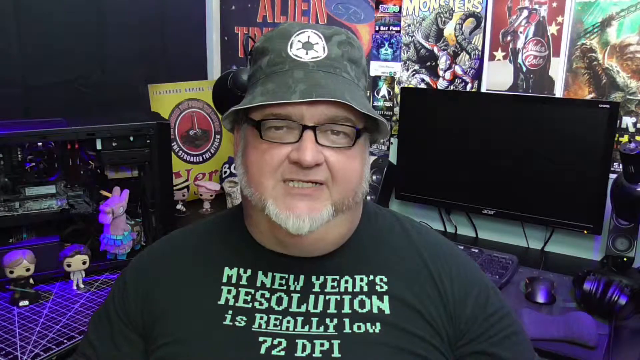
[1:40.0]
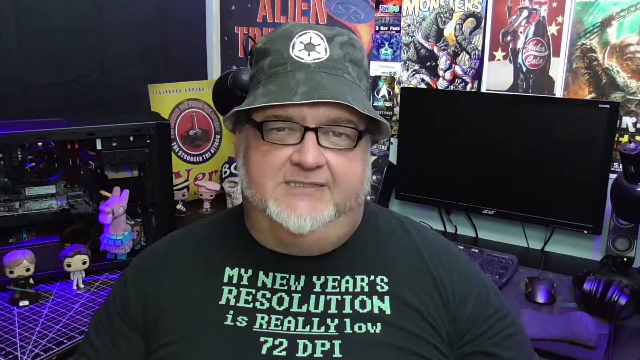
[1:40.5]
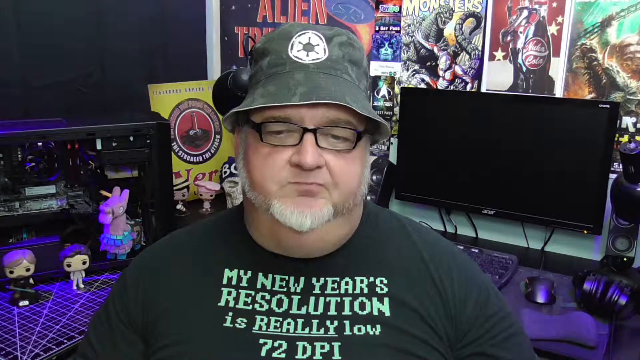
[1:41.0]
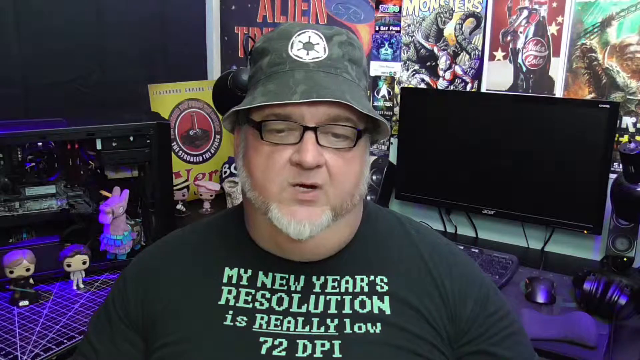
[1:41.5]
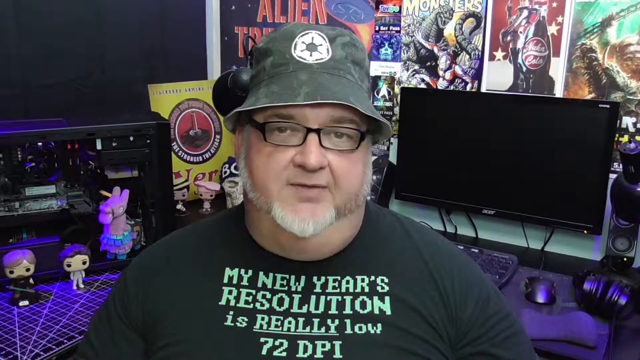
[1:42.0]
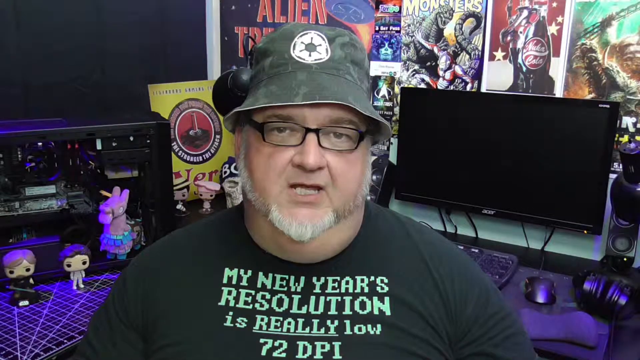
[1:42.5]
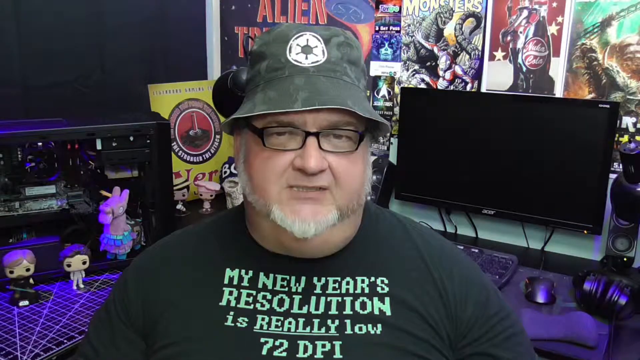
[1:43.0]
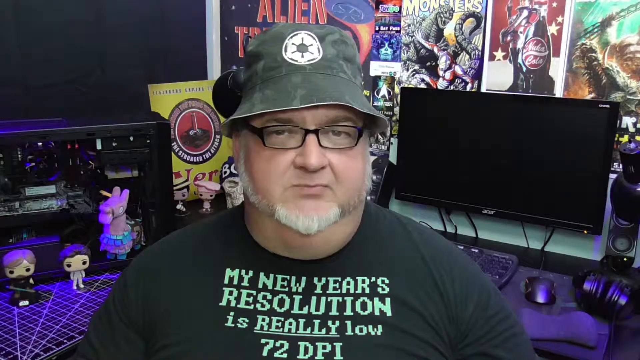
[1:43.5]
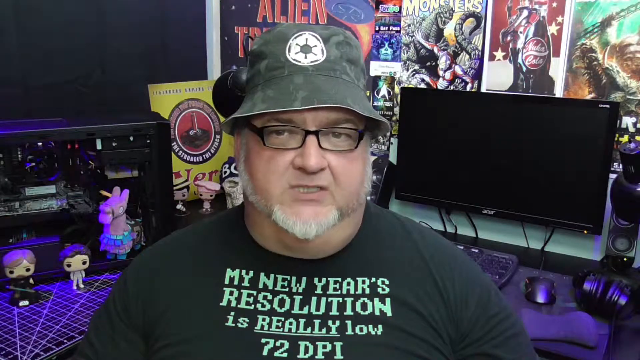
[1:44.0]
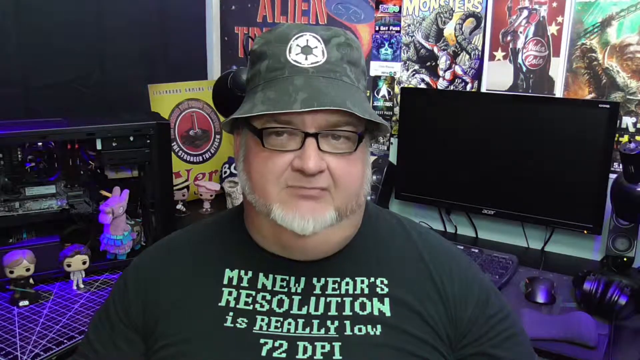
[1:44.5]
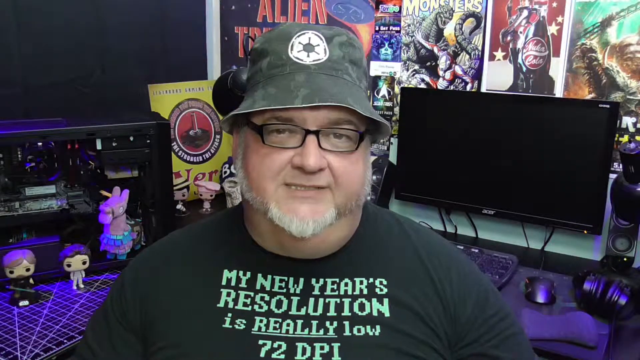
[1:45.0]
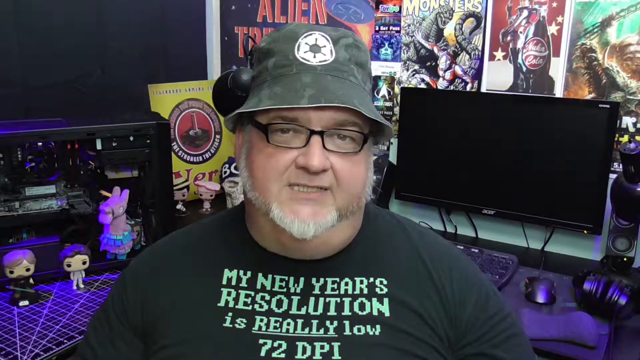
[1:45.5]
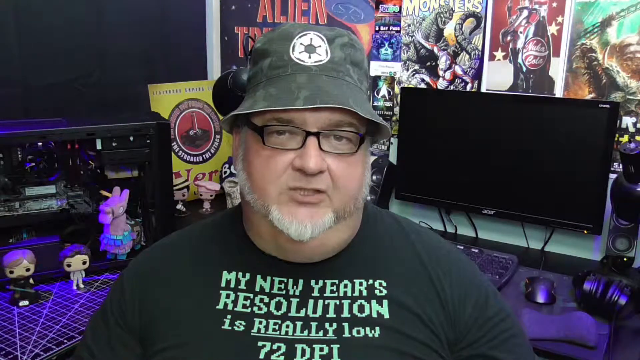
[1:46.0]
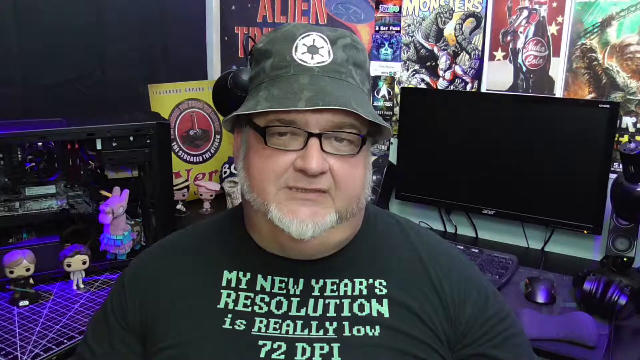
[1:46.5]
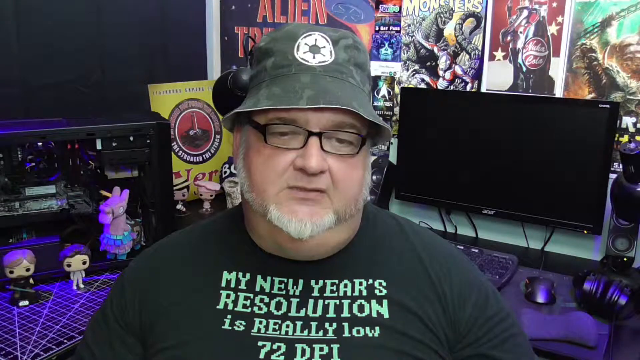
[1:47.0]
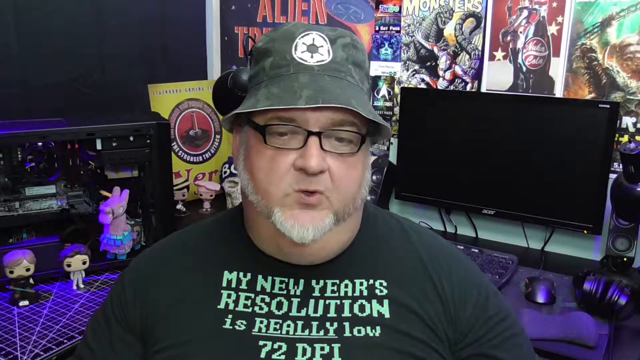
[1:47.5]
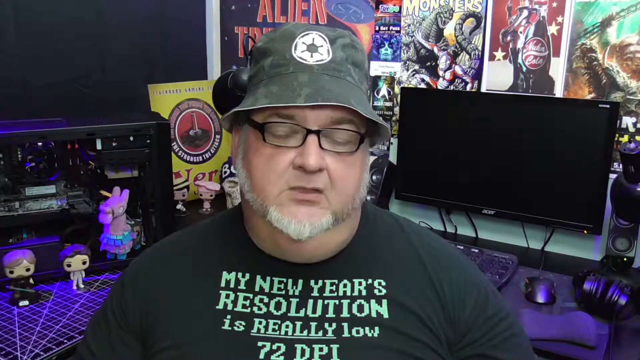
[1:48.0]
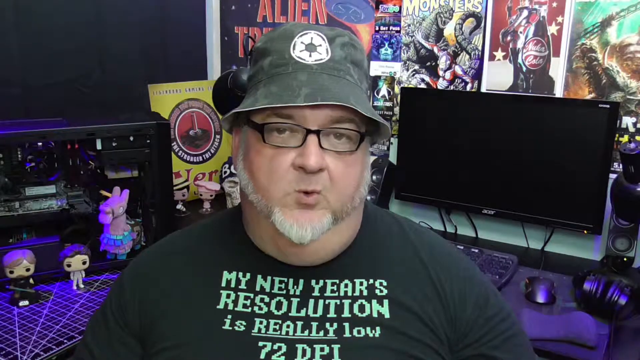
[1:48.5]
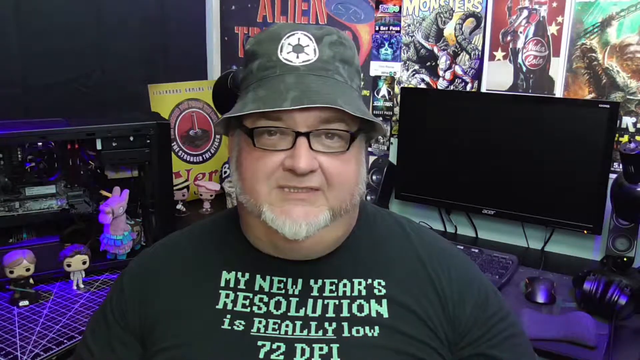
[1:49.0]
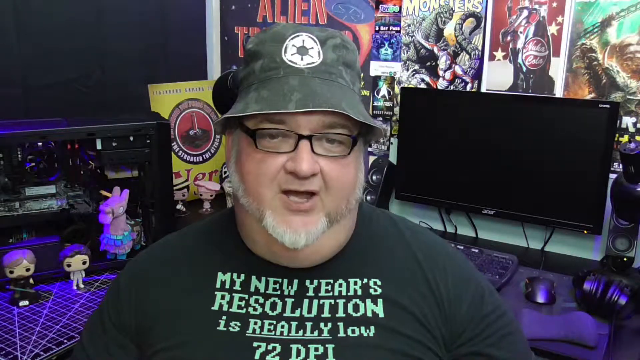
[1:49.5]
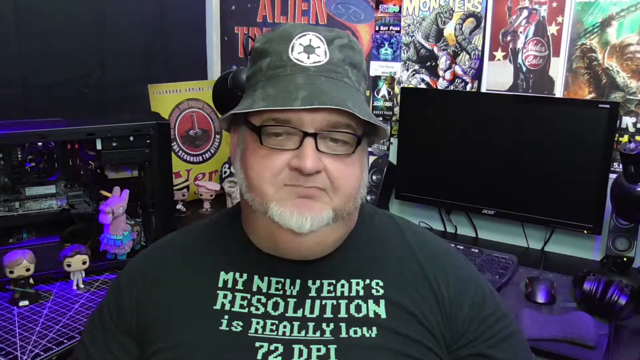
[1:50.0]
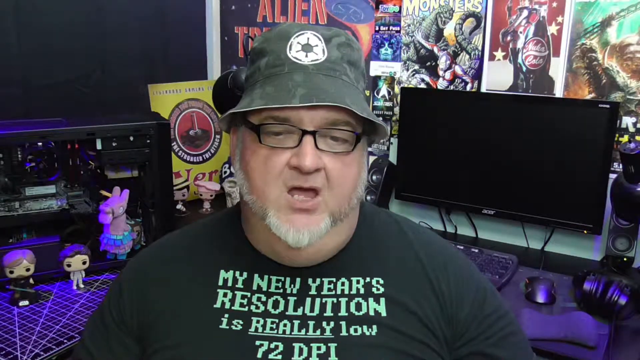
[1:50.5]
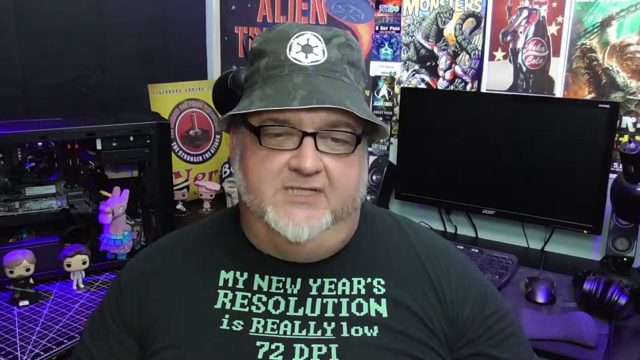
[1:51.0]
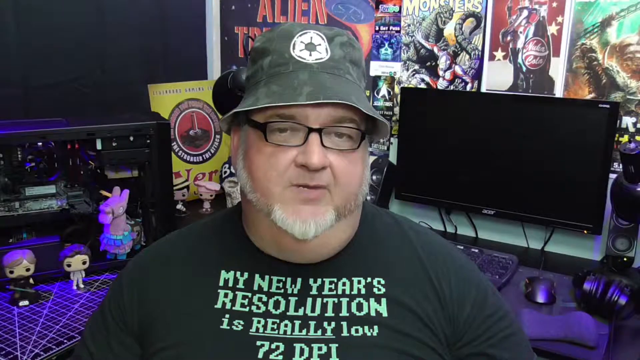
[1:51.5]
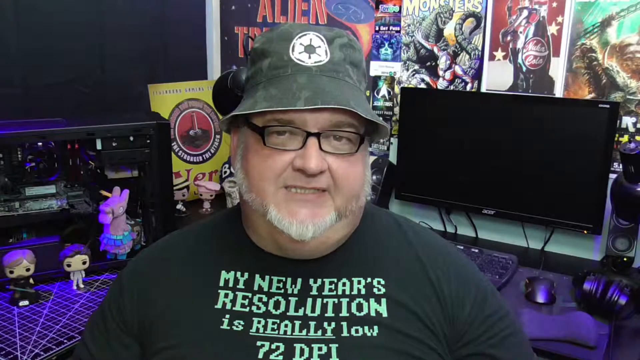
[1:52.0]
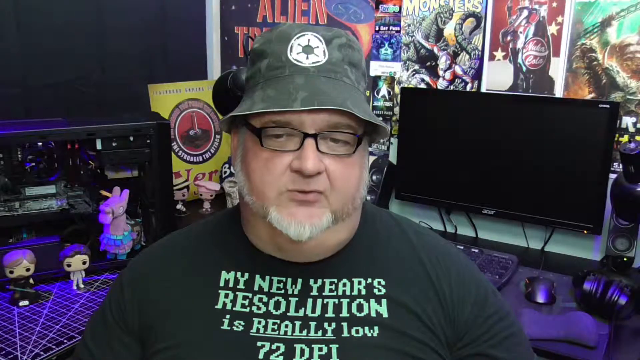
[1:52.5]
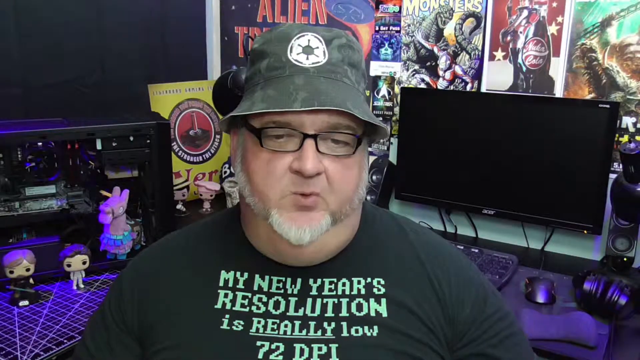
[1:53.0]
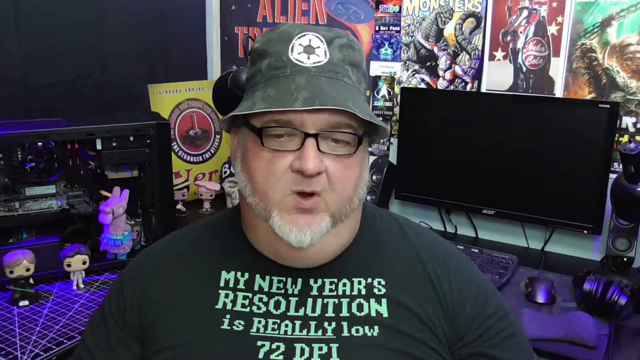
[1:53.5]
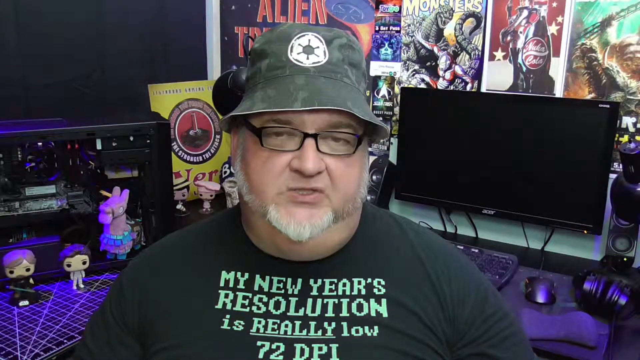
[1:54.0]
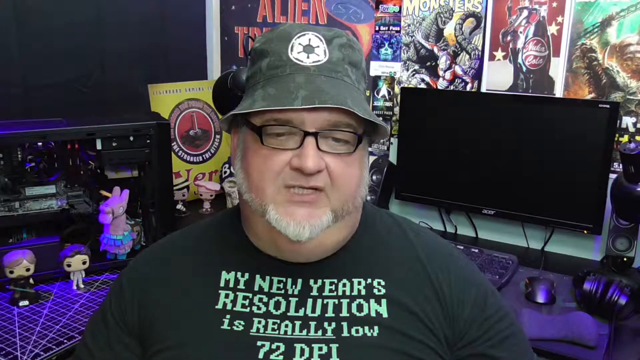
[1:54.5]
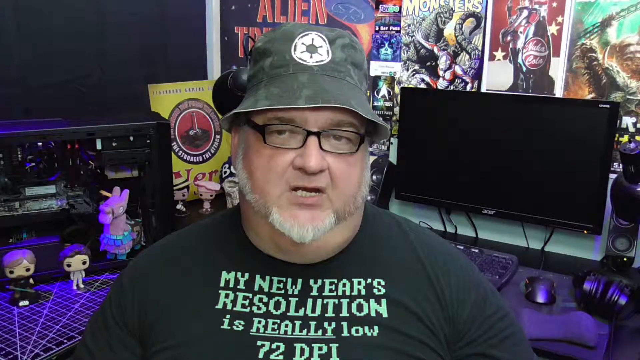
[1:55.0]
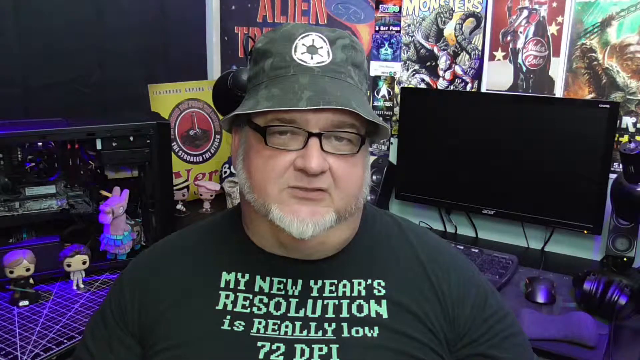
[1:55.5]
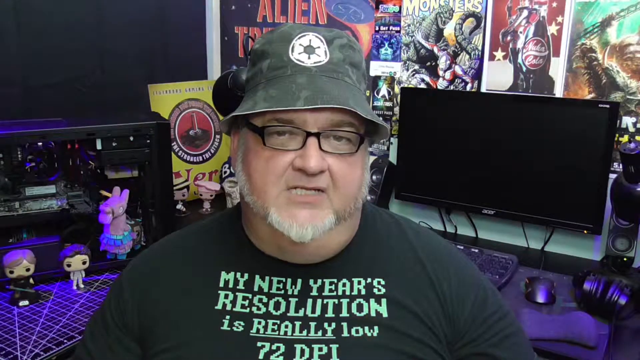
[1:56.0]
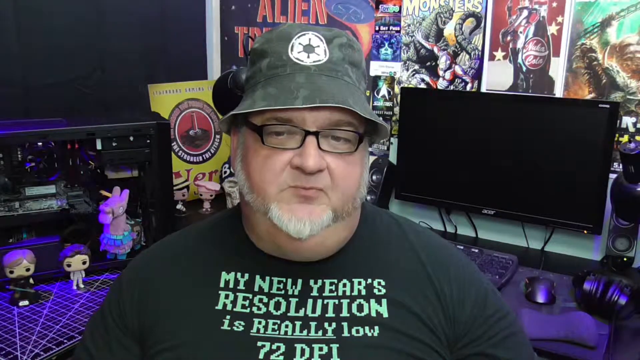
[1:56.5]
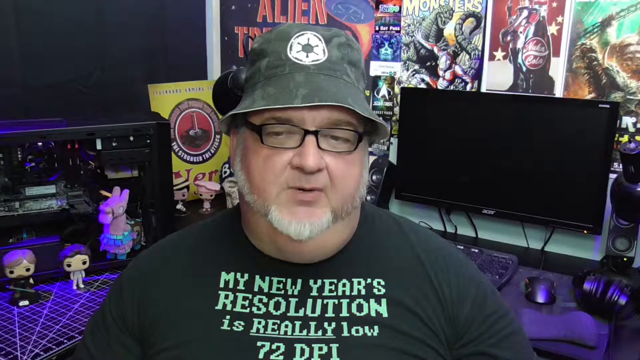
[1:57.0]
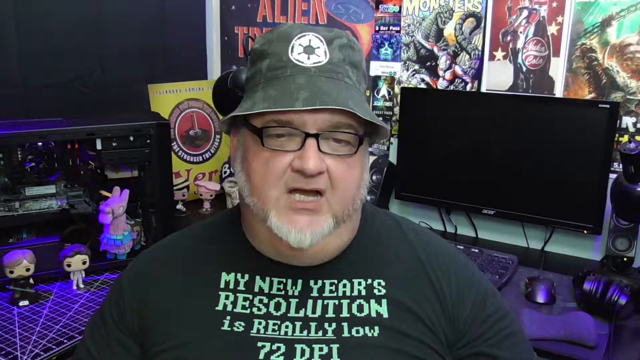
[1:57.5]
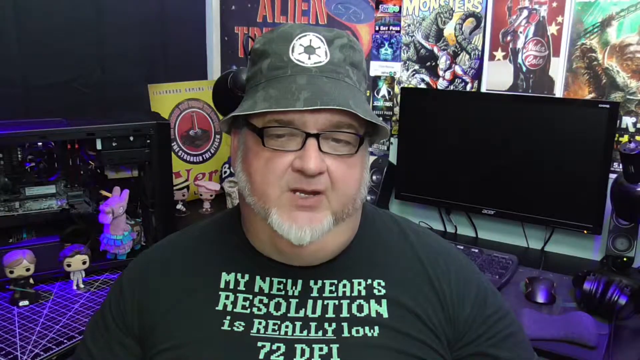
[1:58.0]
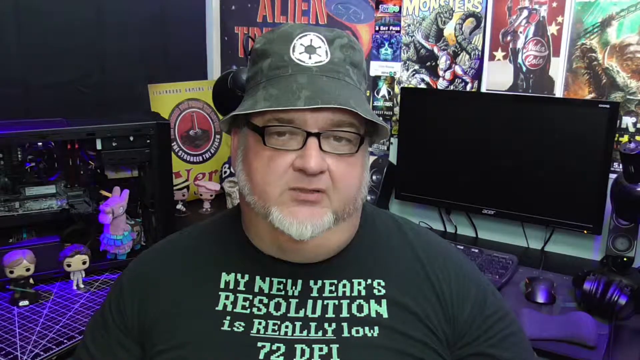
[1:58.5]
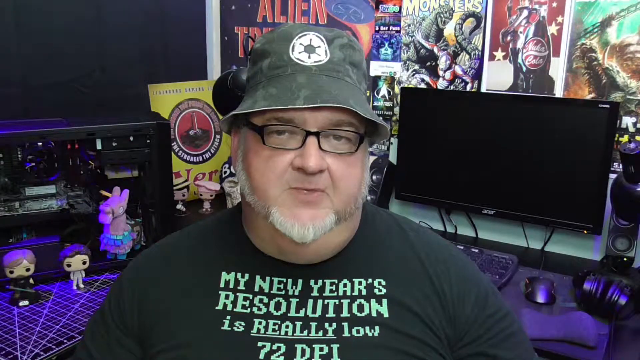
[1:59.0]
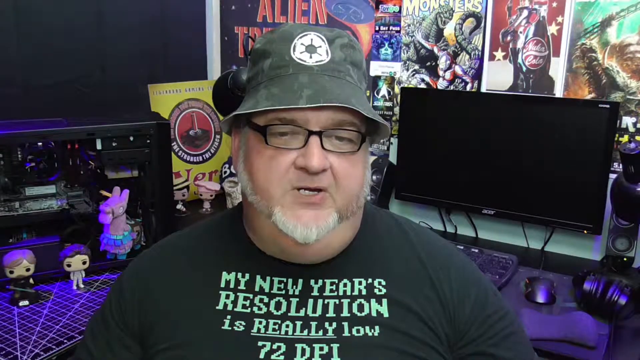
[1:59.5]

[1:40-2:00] The man speaks directly to the camera, his eyes still wandering a bit as if he is taking reference from something written. As he speaks, his quite big double chin bounces, and he is very expressive, his eyebrows moving quite a lot. His glasses are small and rectangular with a black frame. His bucket hat has a white logo on the front: a white circle with a white hexagon shape inside, with a spot inside that is not printed so the camo of the hat shows through, and a circle with six little strings coming out of it from the six hexagon tips. Behind him there also seems to be a piece of poster-looking art in a yellow color that is not hung up, just behind two Funko Pops that are behind the computer case but more off to the right, so they are still visible. In front of it, next to the Funko Pops, there also seems to be a skull statue.